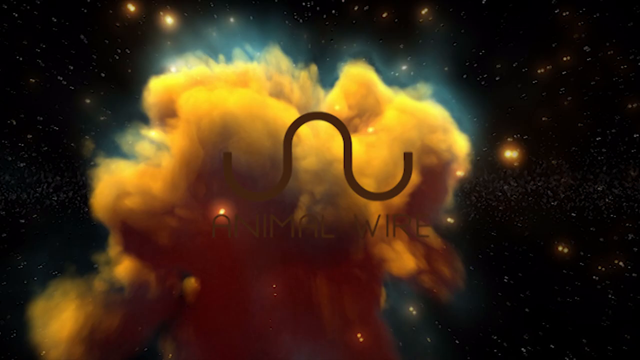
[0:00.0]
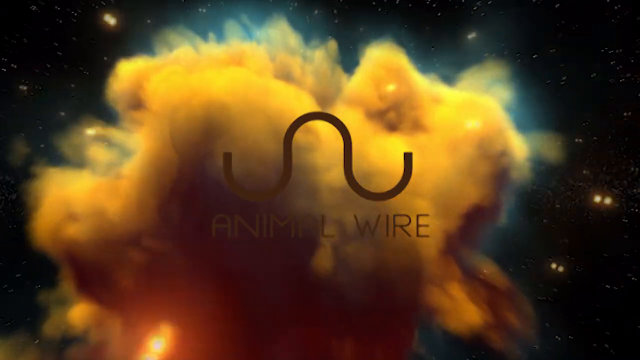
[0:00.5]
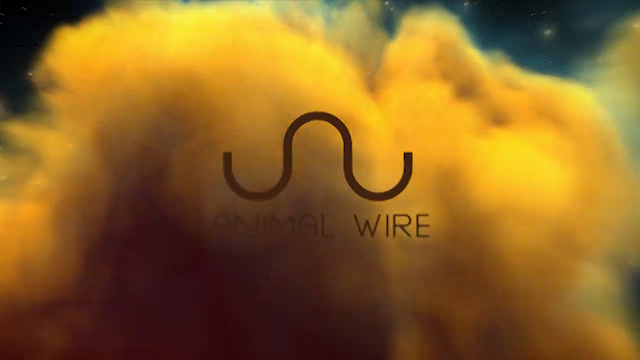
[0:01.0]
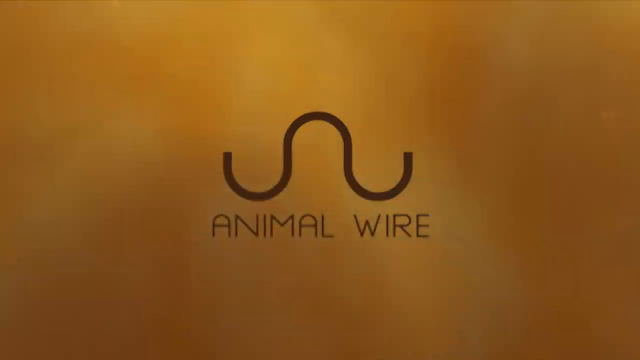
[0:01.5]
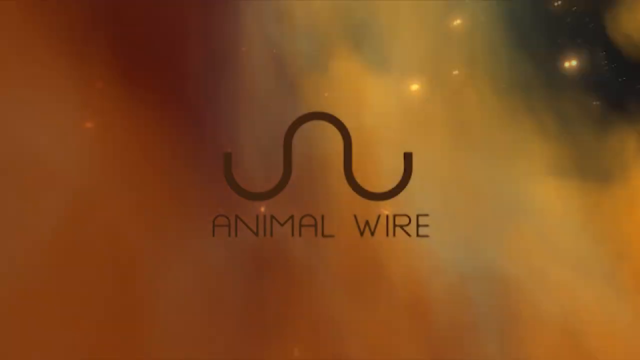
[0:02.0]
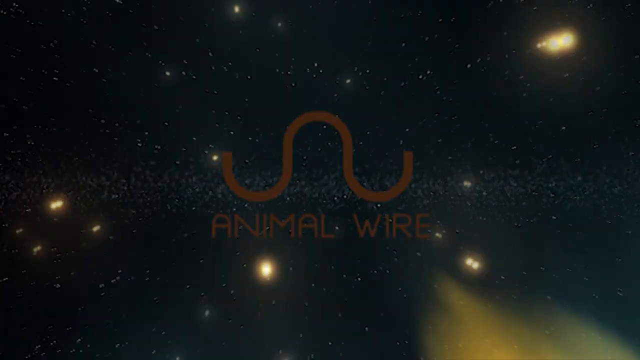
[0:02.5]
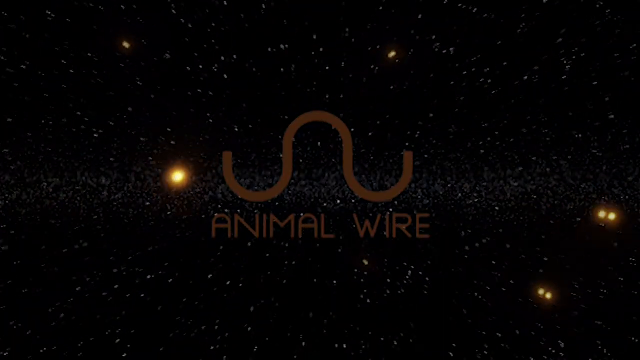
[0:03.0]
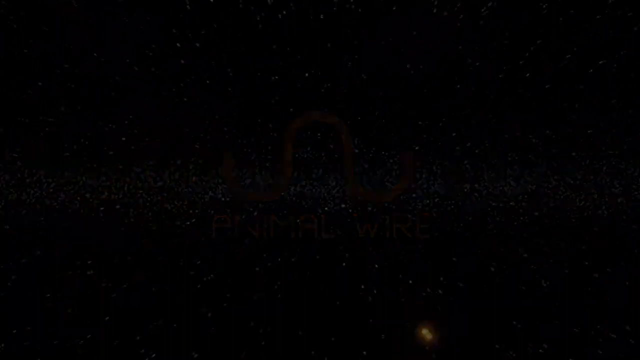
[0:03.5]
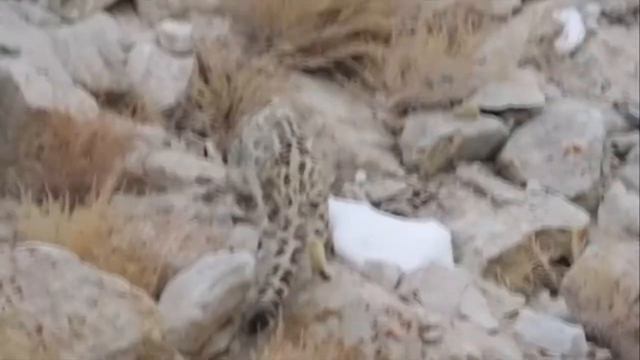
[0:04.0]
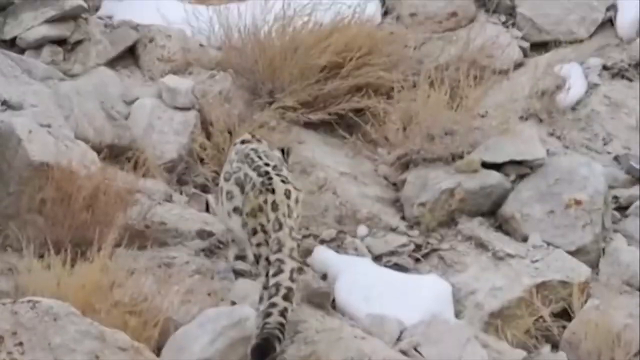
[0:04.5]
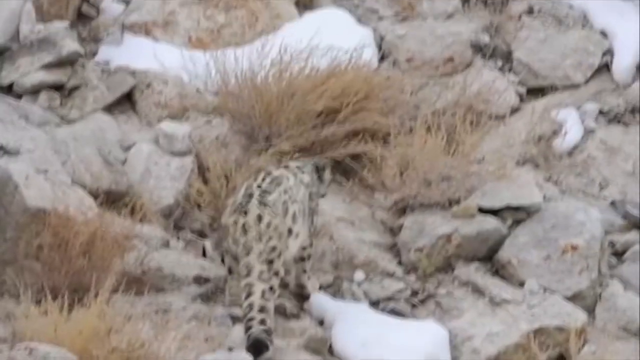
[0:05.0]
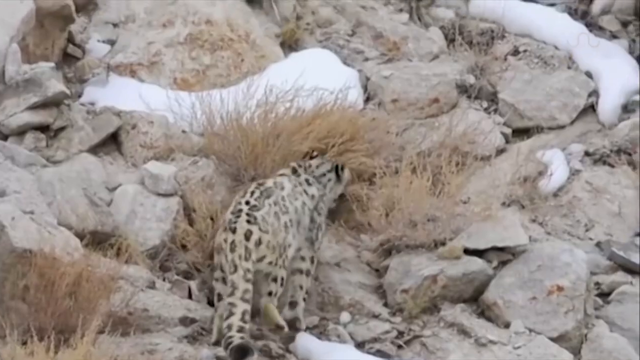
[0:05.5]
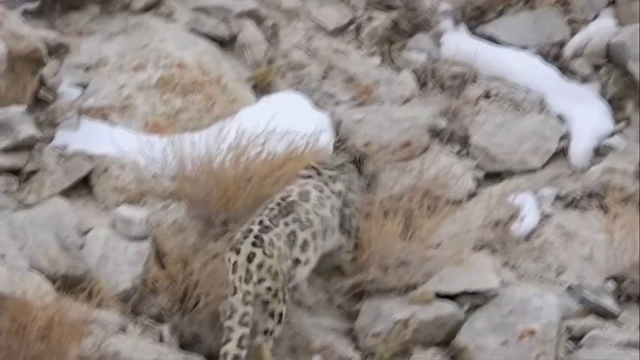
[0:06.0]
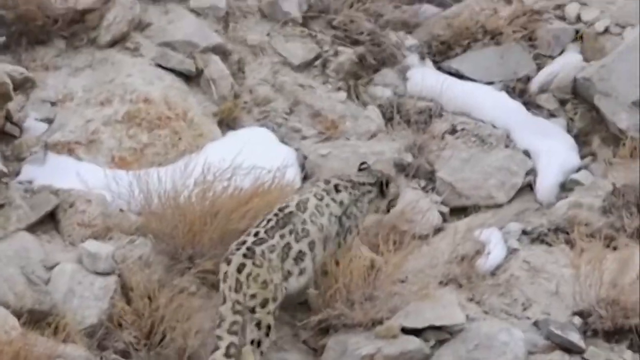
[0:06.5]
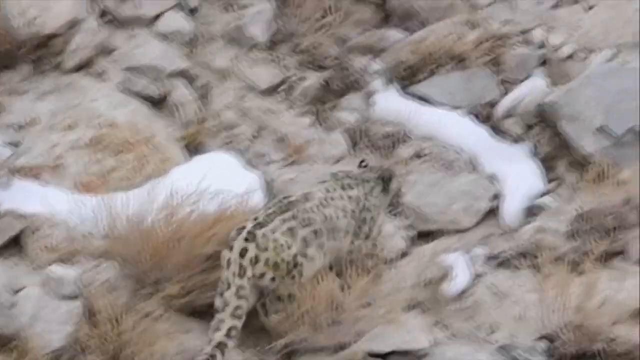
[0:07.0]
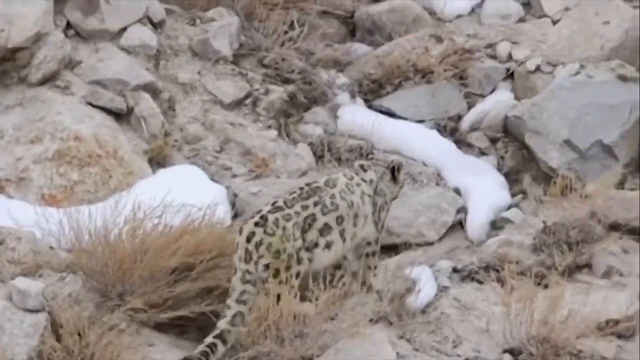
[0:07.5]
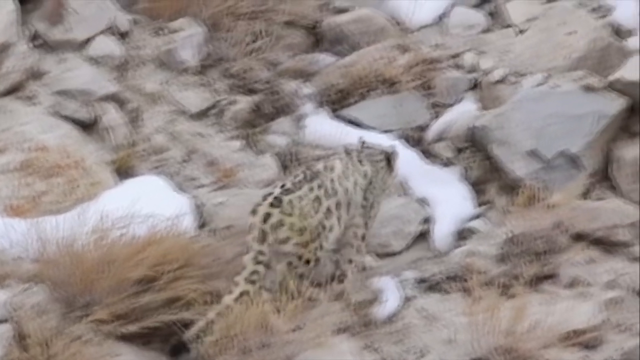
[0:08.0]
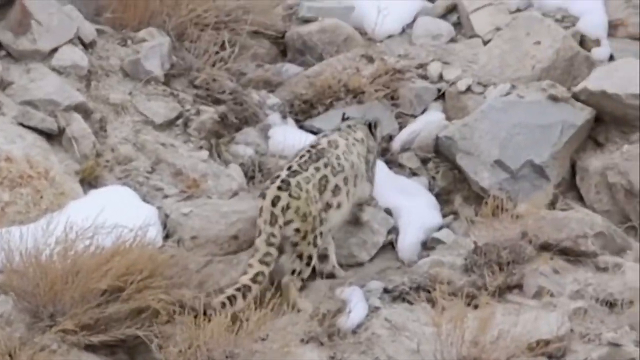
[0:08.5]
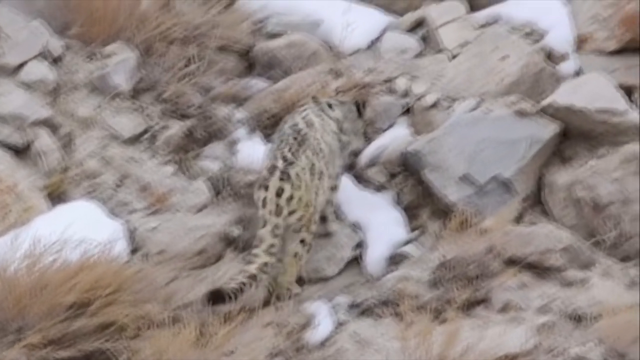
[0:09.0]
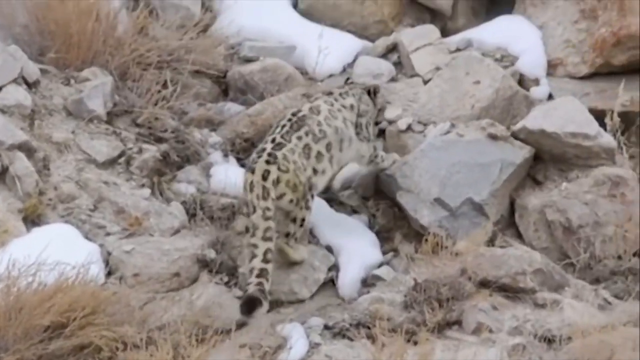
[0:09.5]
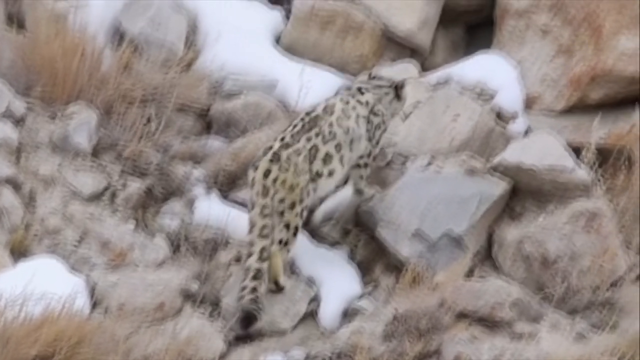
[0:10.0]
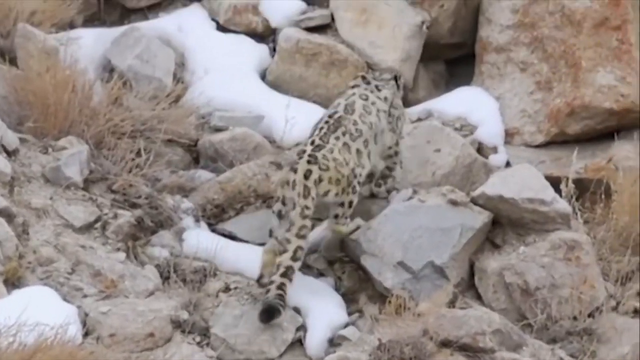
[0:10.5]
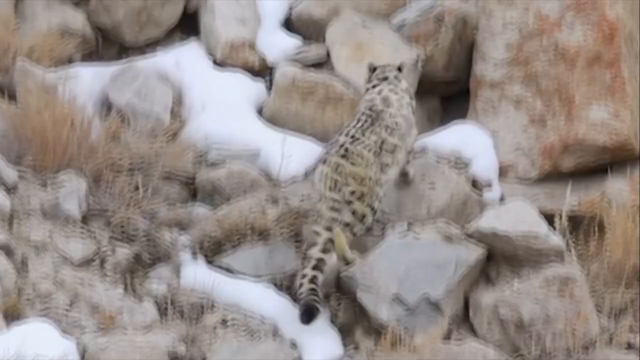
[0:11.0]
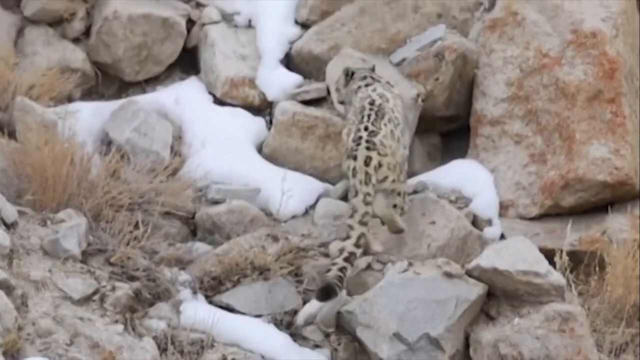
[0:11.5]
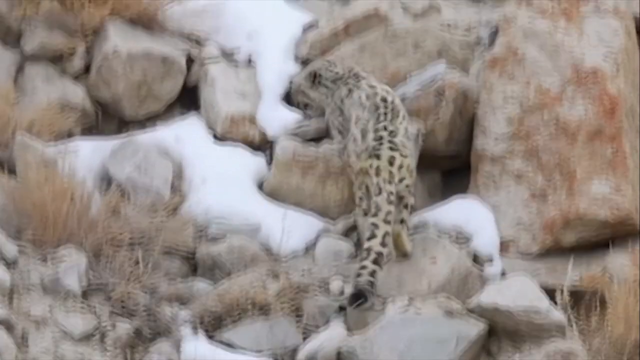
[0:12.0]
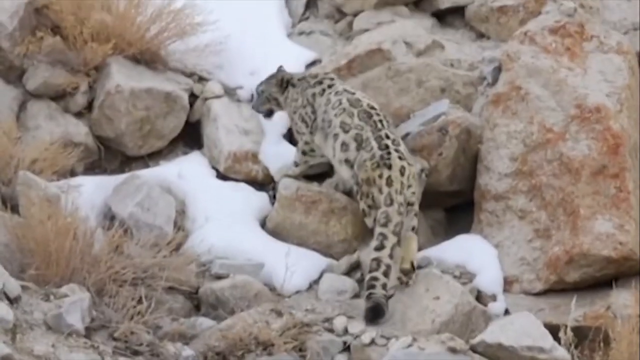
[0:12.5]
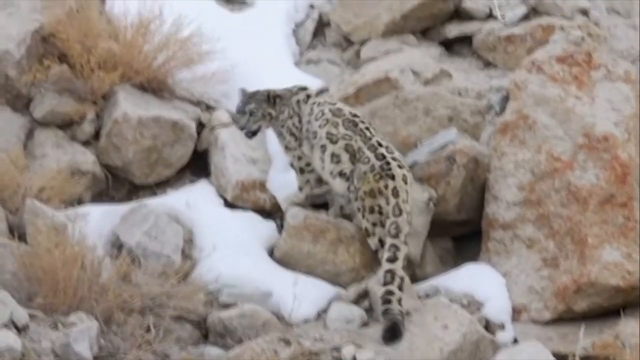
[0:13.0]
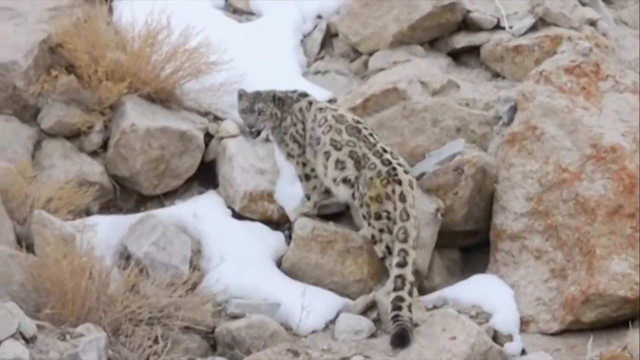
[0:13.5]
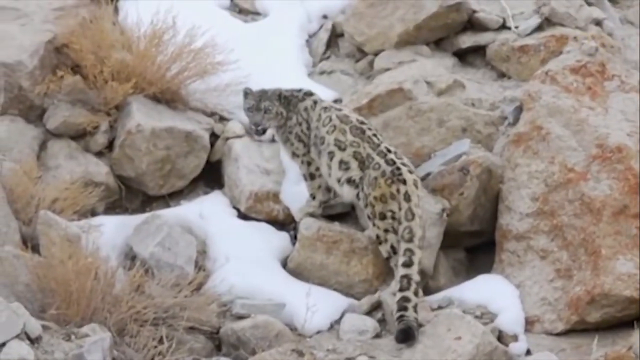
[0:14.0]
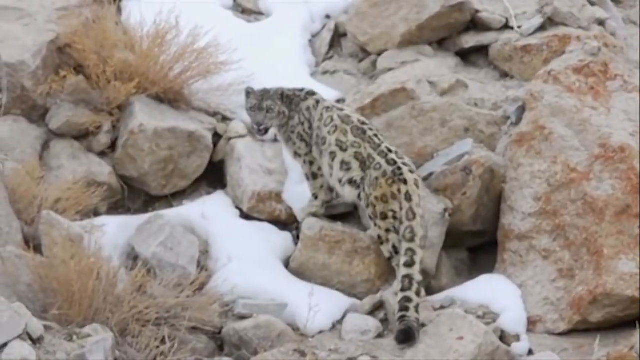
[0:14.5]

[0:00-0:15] This Animal Wire video shows a snow leopard walking up what looks like the side of a mountain. The terrain is gray and brown rocks with snow on them, and there seems to be brown, dried-up foliage on ground cover plants. The leopard has black and gold spots on what looks to be very light tan or white fur. It climbs up the mountain, then turns around and looks toward the camera.